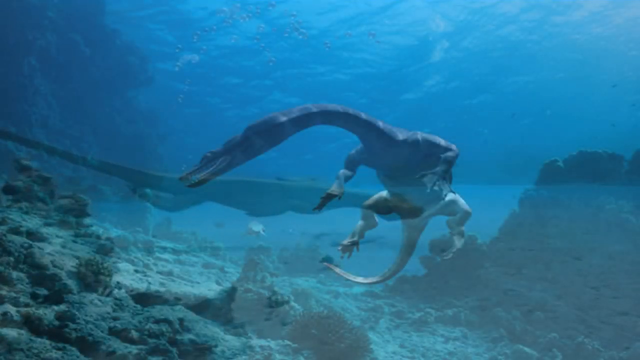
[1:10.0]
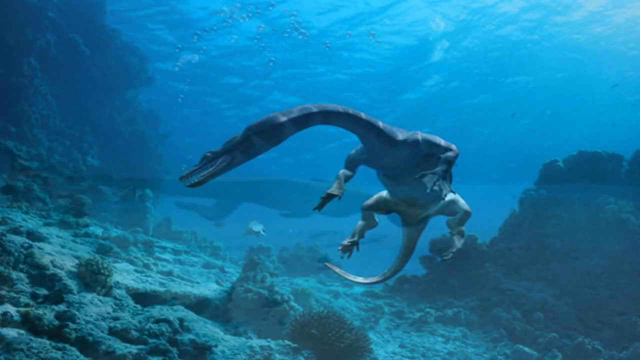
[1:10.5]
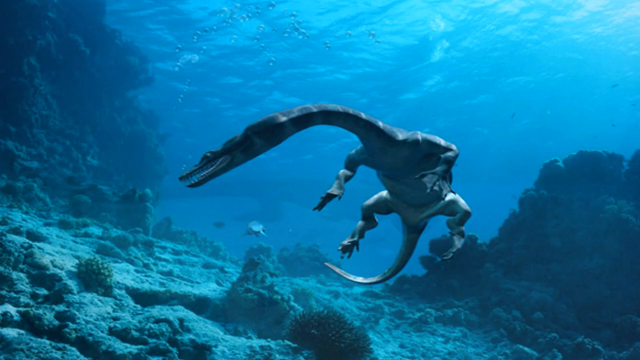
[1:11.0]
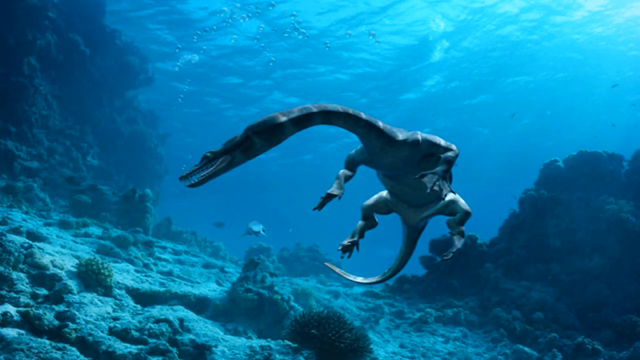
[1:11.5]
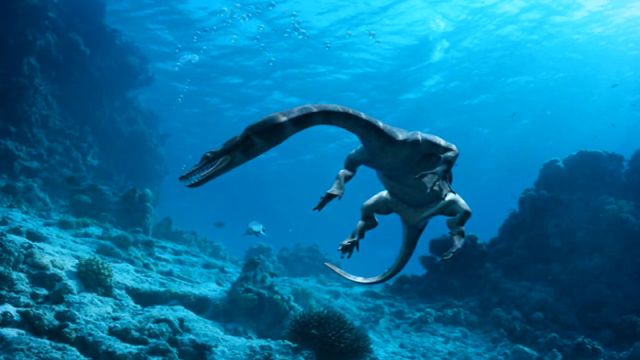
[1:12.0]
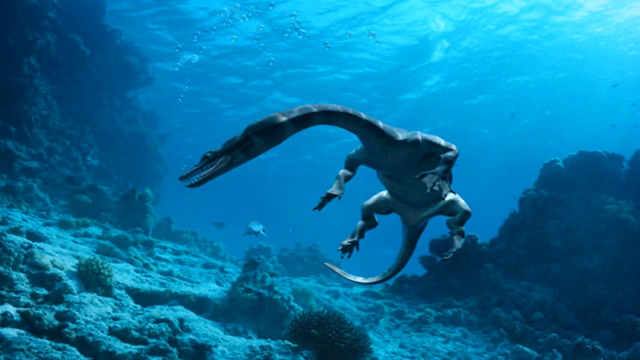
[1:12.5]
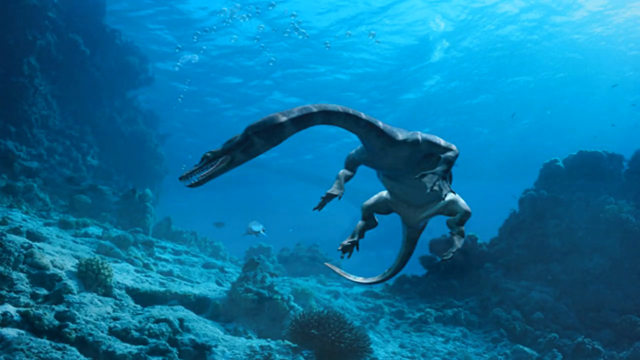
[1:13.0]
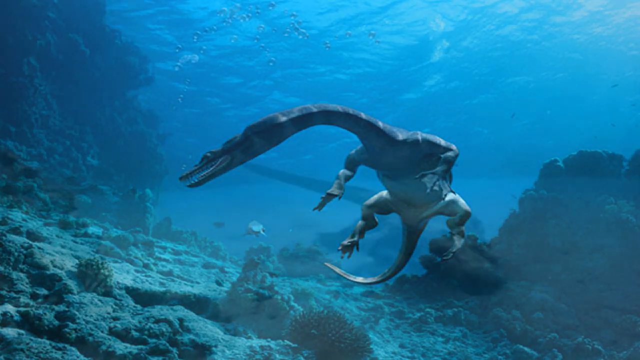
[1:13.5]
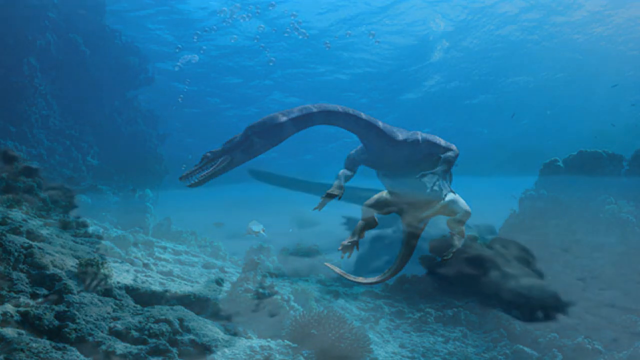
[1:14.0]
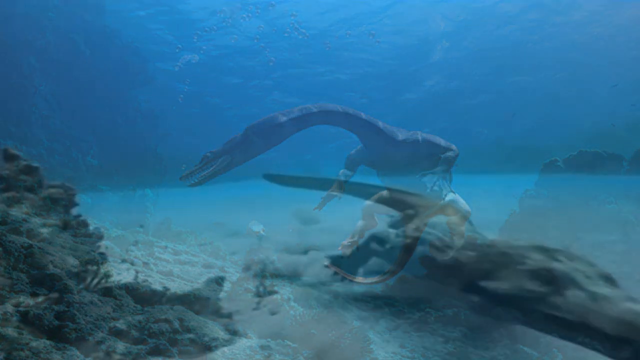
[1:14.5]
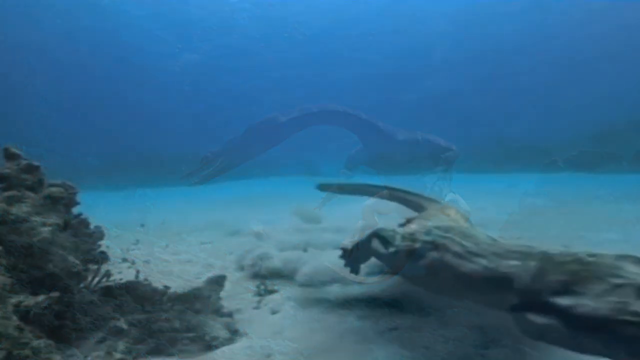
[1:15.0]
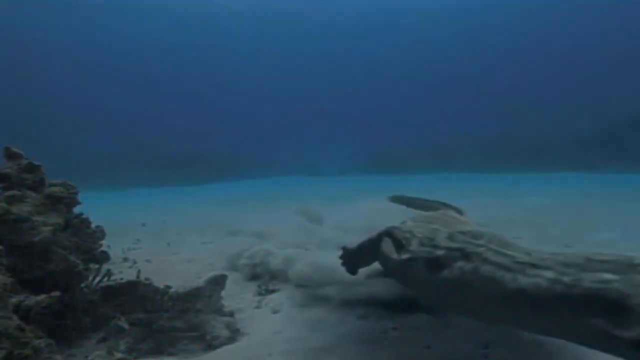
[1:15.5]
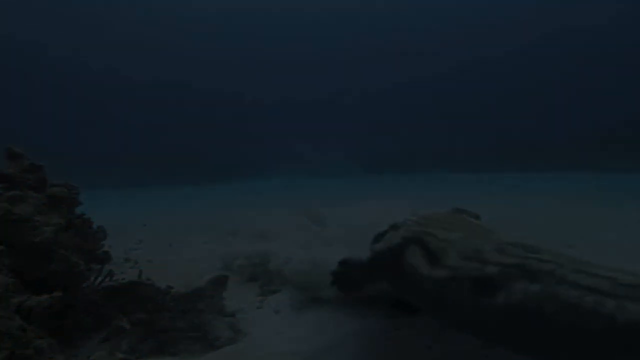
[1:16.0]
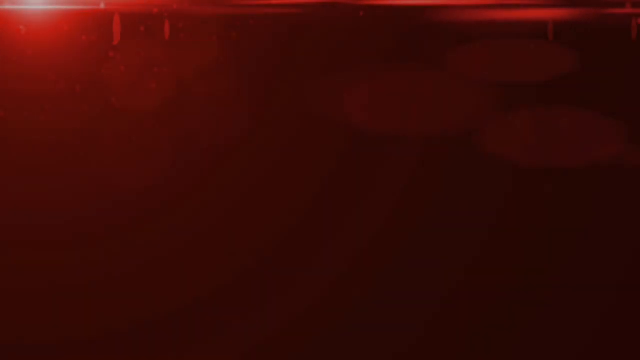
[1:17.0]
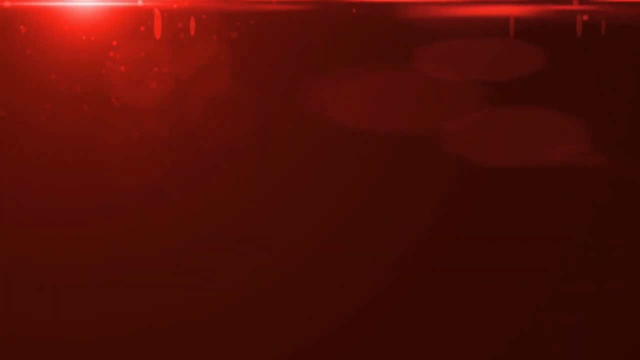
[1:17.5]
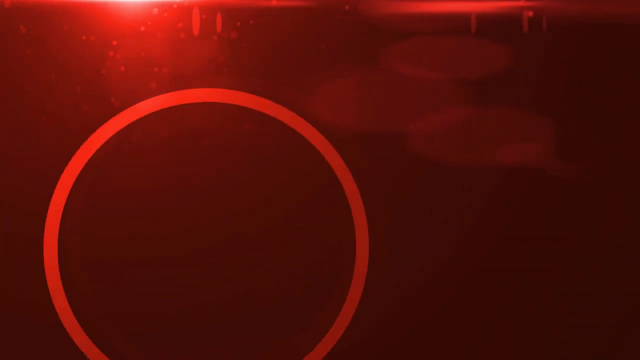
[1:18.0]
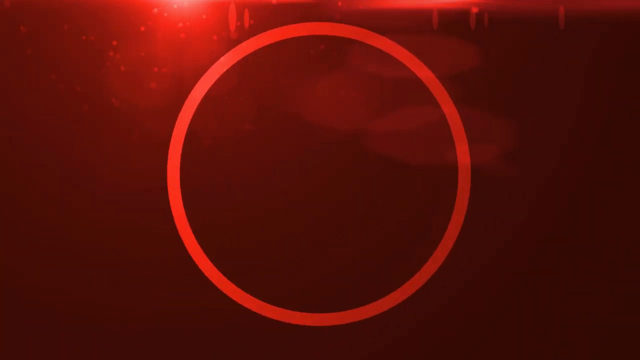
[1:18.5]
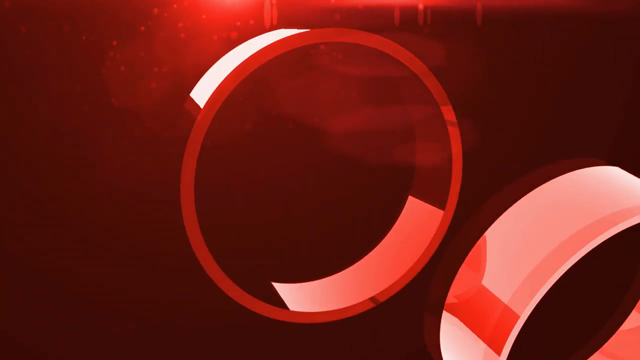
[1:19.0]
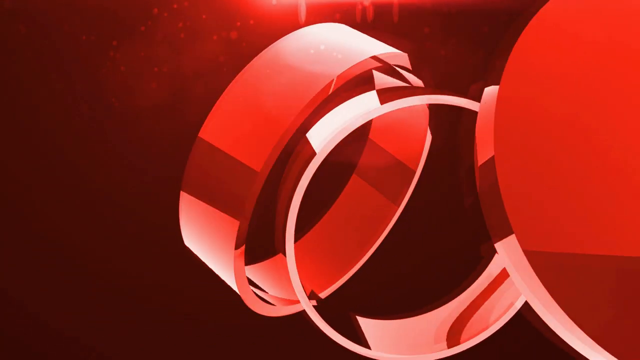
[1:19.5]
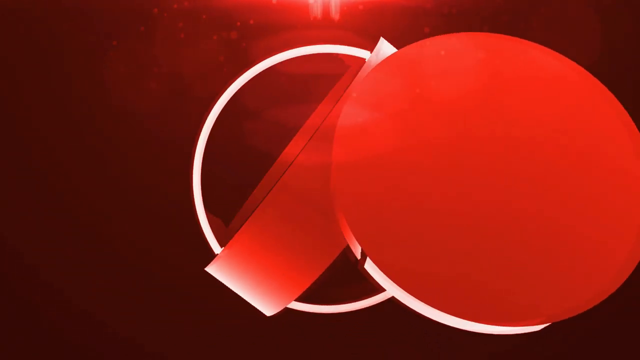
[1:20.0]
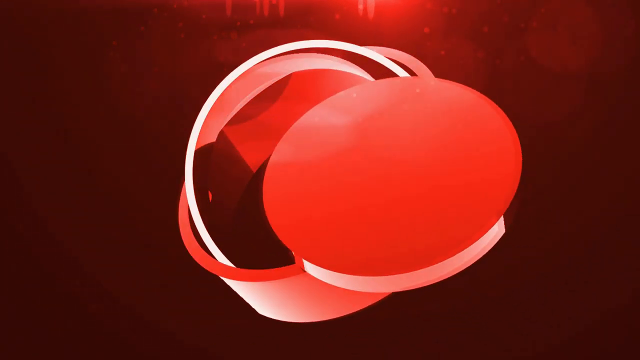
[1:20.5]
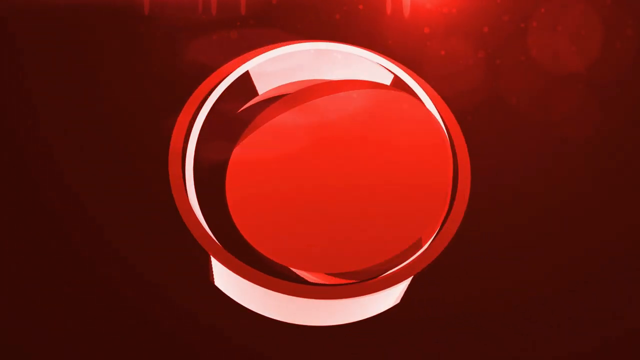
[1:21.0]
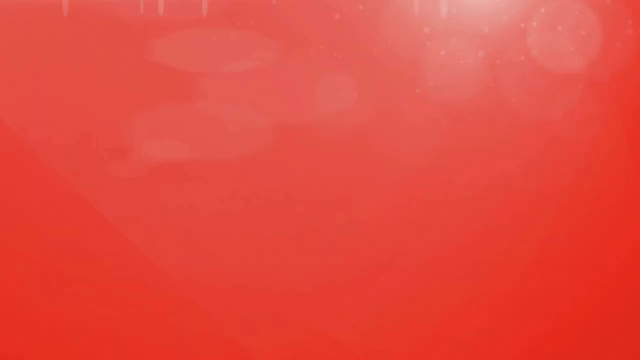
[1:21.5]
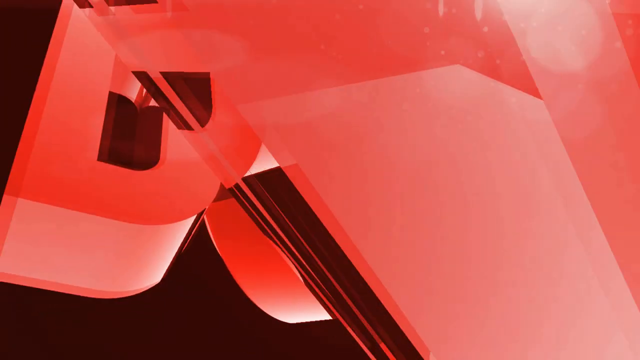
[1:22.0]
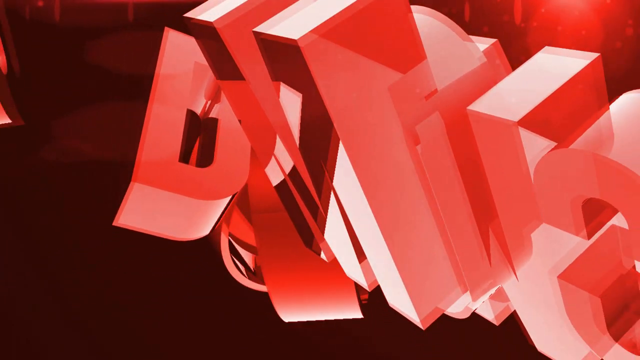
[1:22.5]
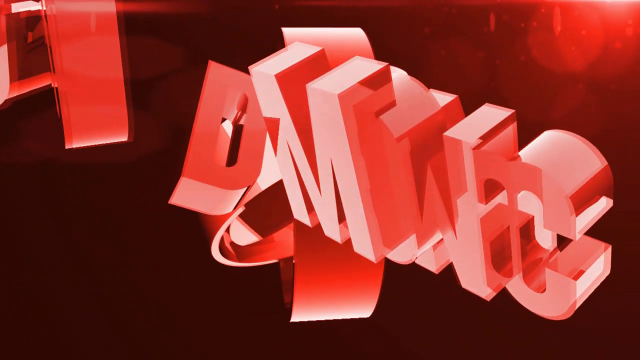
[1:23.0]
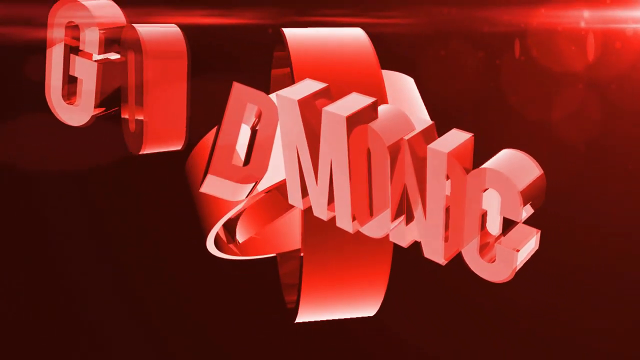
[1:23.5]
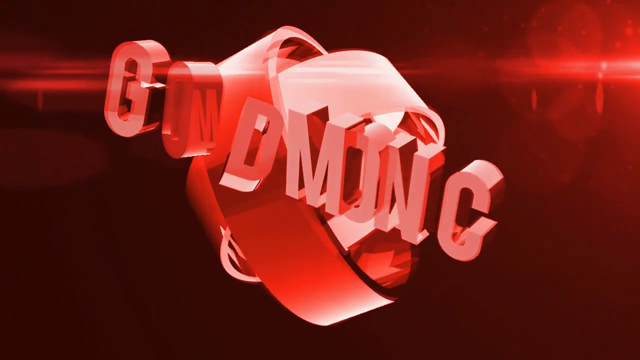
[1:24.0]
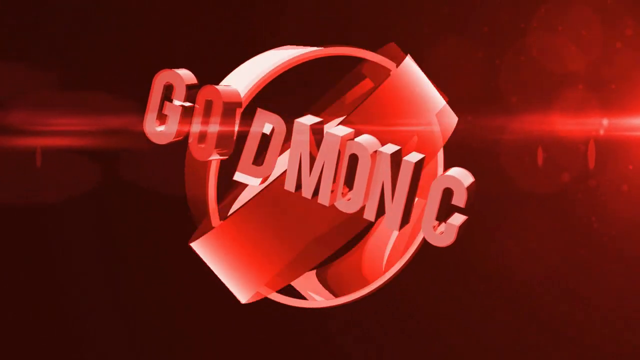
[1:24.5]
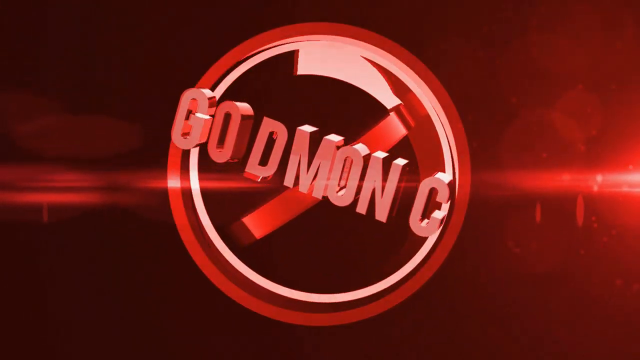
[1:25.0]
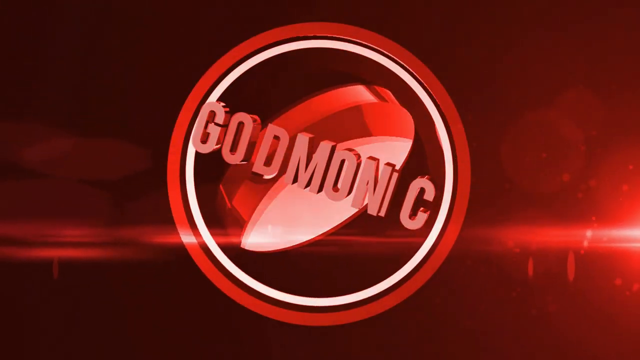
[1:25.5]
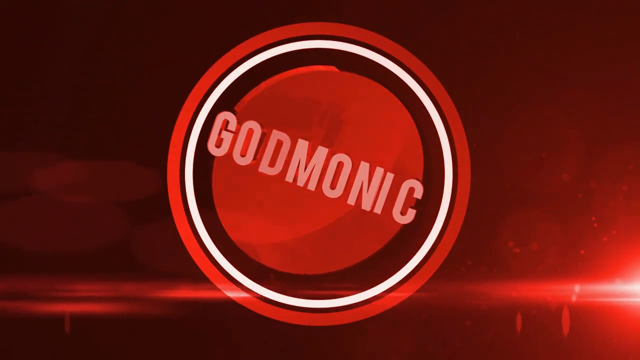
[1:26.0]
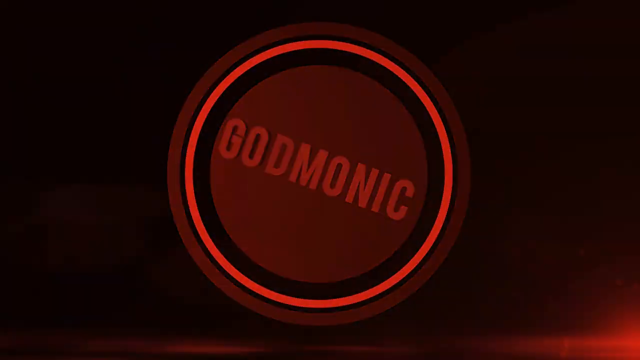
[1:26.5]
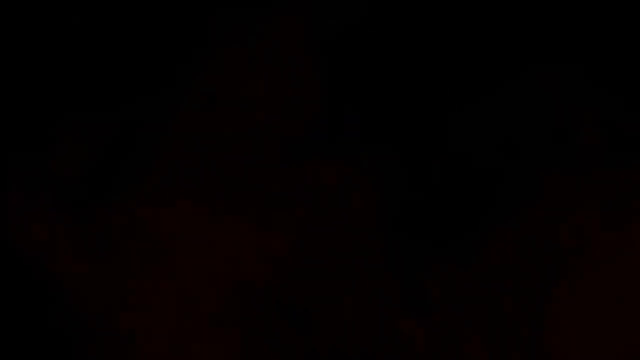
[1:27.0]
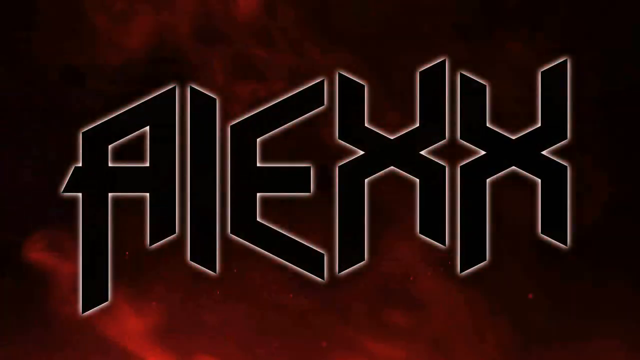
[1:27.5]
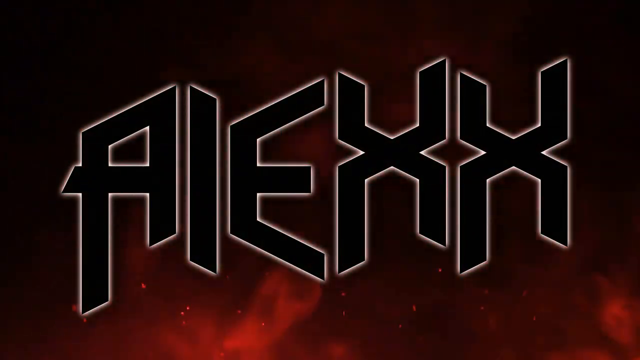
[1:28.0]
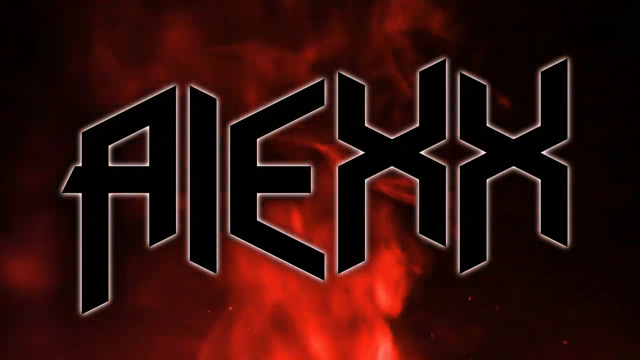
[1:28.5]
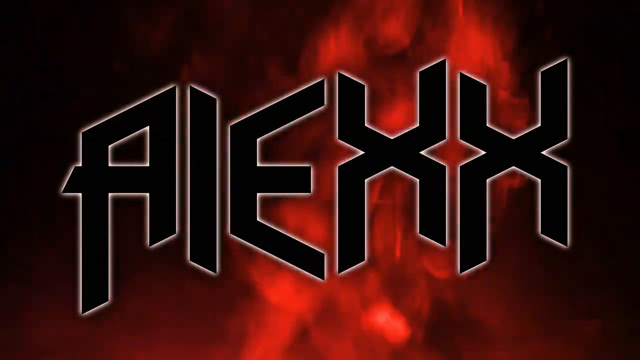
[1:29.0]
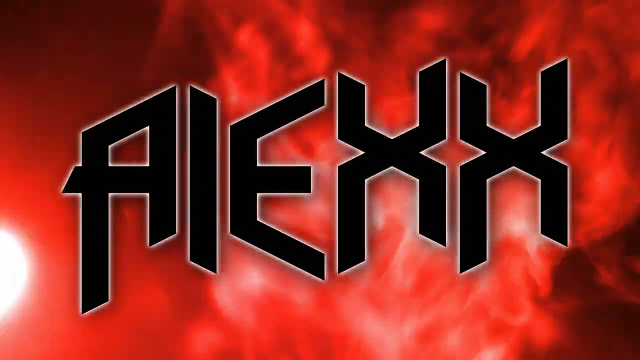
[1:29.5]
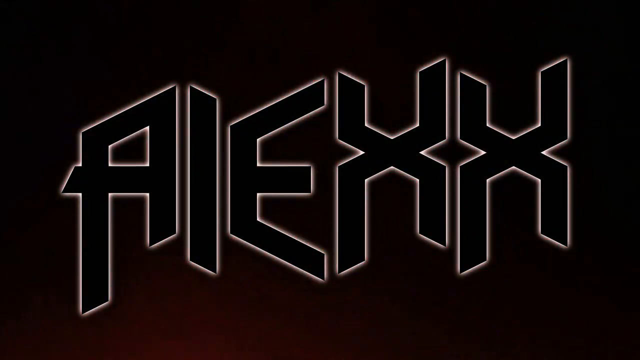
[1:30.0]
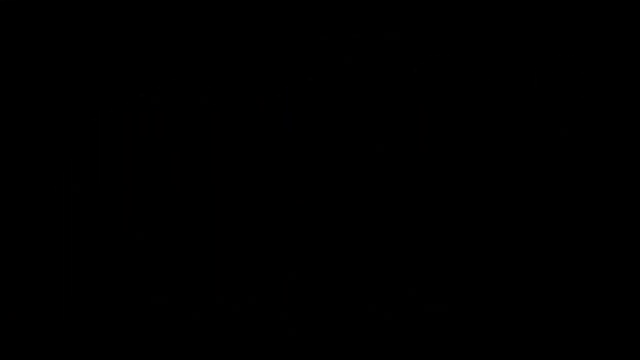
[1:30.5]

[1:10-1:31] A dinosaur swims in the water in what is kind of an animated digital production, moving along the bottom of a waterway. The video then cuts to the end of the film, where many red circles are kind of spinning and letters move across reading "GOD MONIC", all in capital letters. At the very end, some very large, kind of angled letters pop up reading "AIEXX", with some red fire in the middle. The letters are very pointed, black and lined in white, and it looks like a whole bunch of fire shoots out, very fast and flamey.